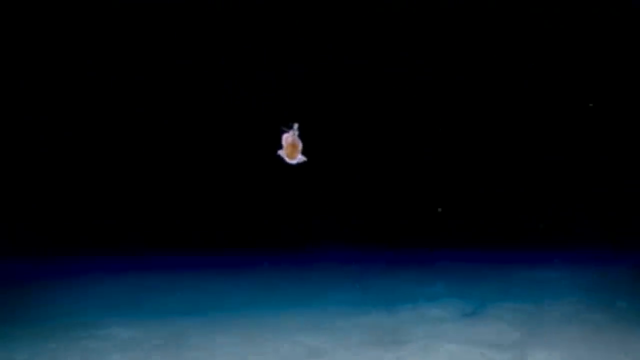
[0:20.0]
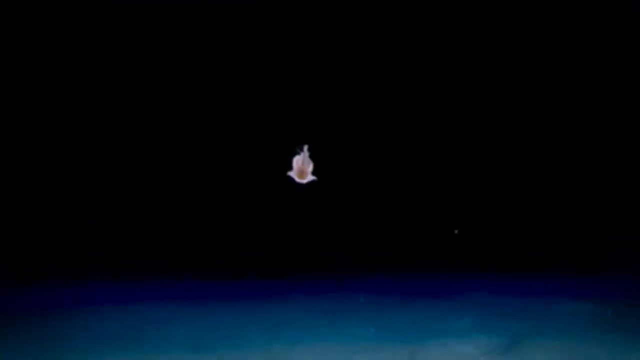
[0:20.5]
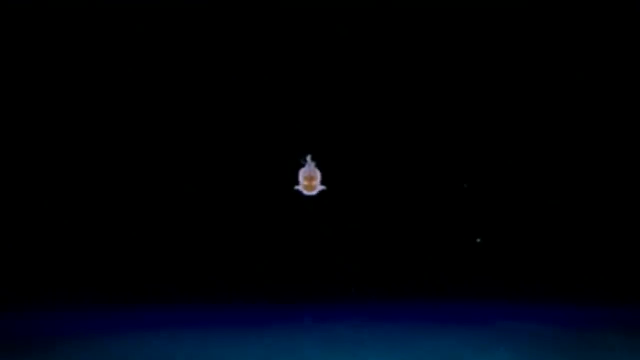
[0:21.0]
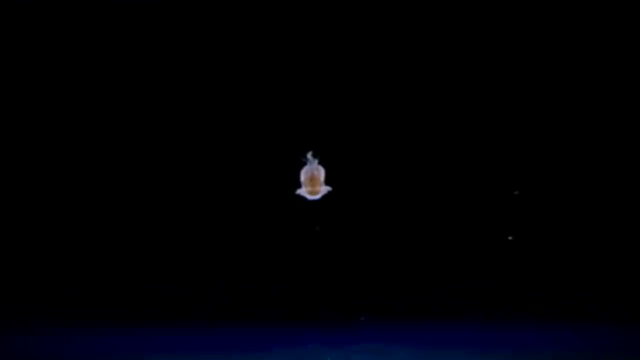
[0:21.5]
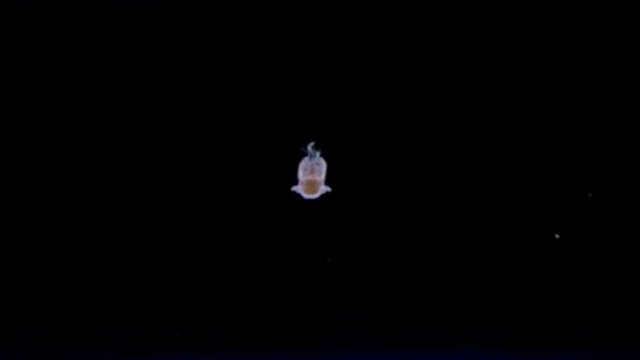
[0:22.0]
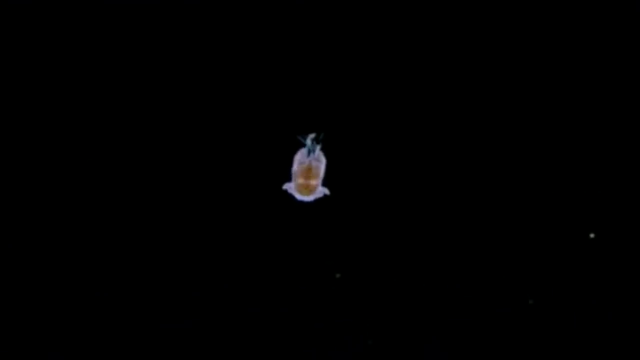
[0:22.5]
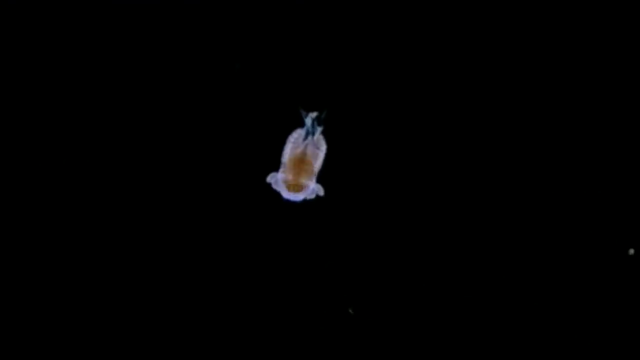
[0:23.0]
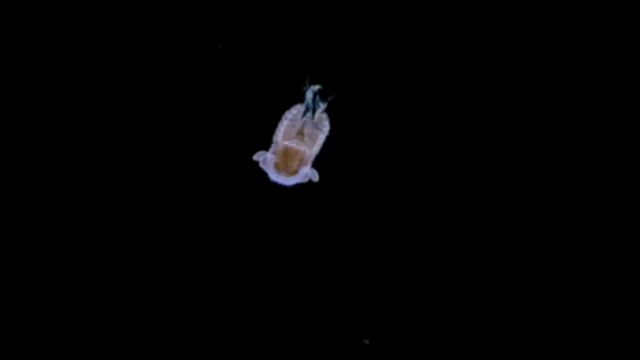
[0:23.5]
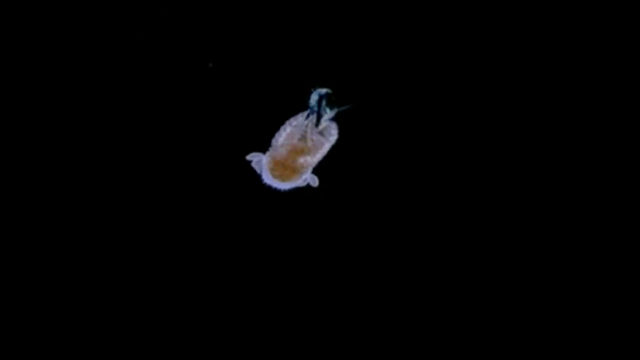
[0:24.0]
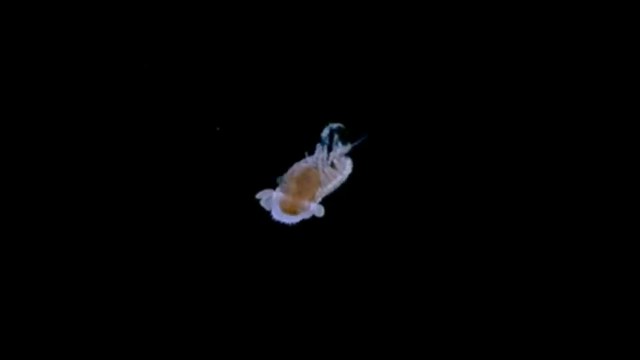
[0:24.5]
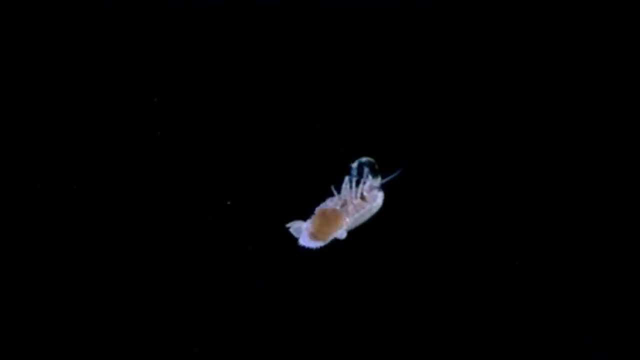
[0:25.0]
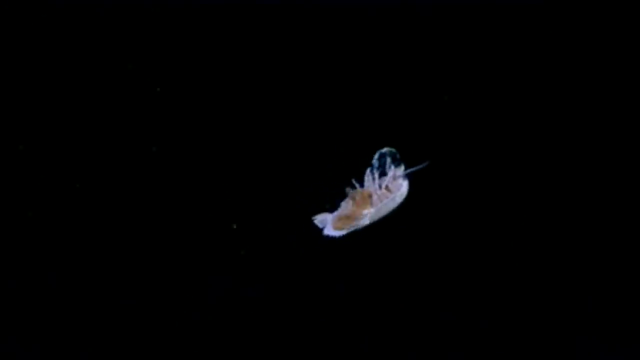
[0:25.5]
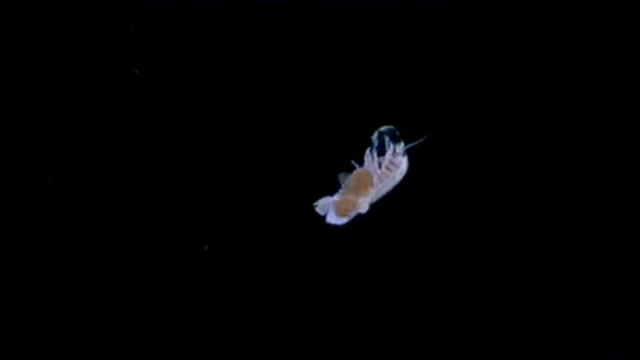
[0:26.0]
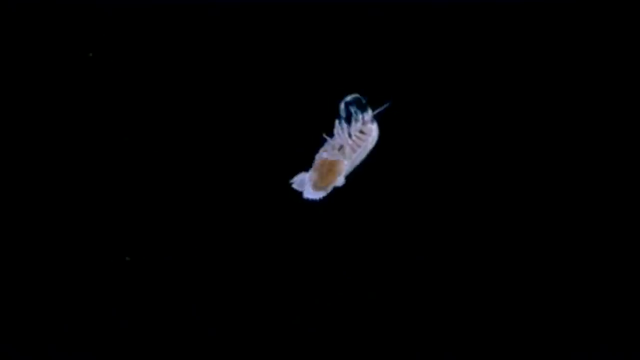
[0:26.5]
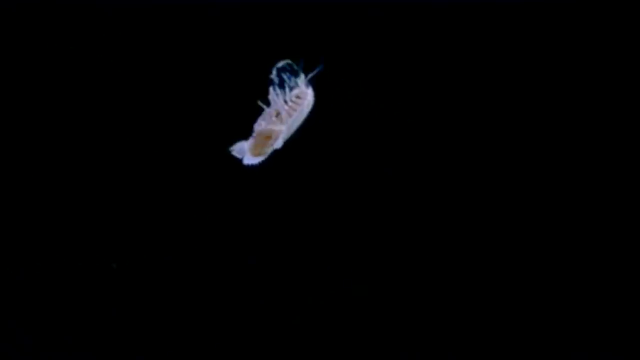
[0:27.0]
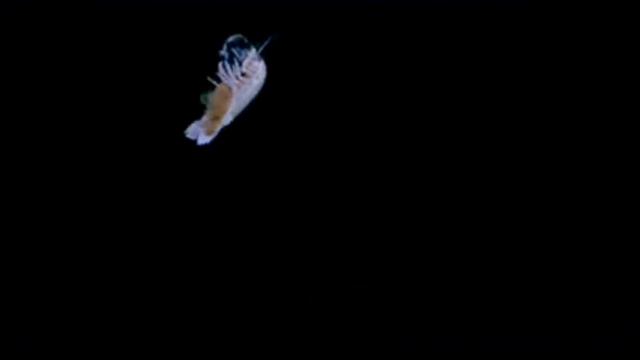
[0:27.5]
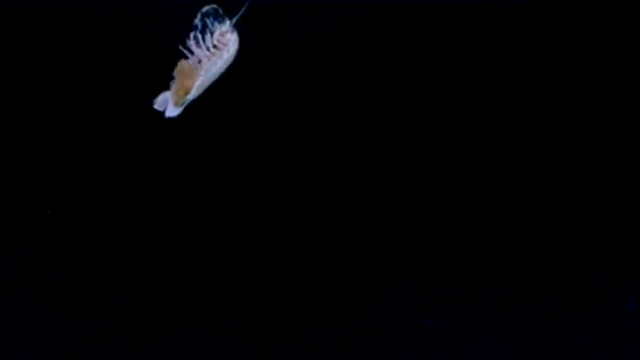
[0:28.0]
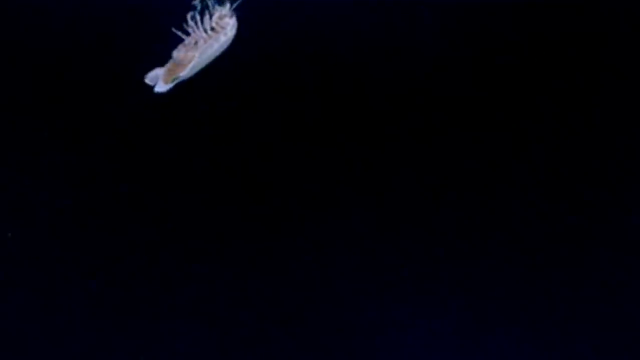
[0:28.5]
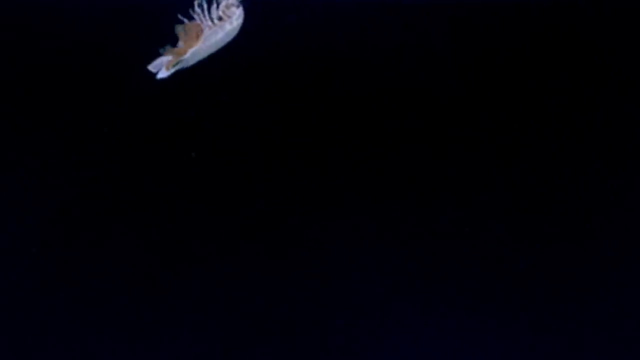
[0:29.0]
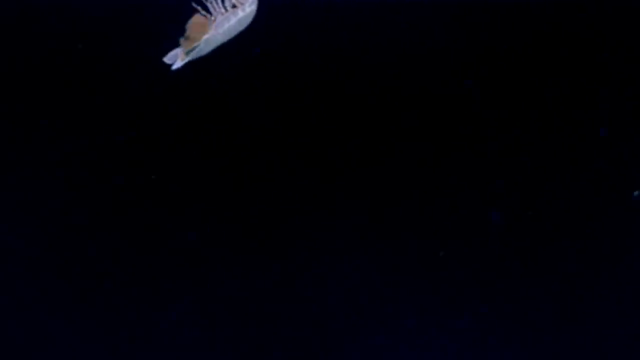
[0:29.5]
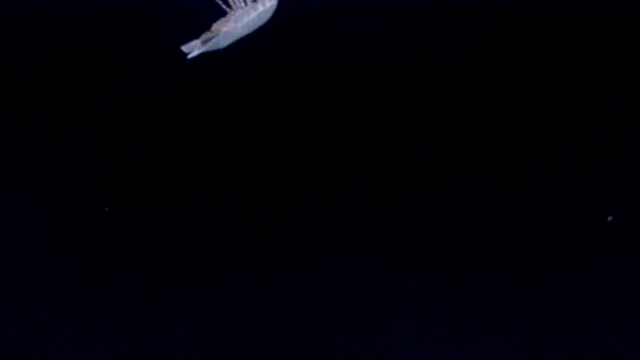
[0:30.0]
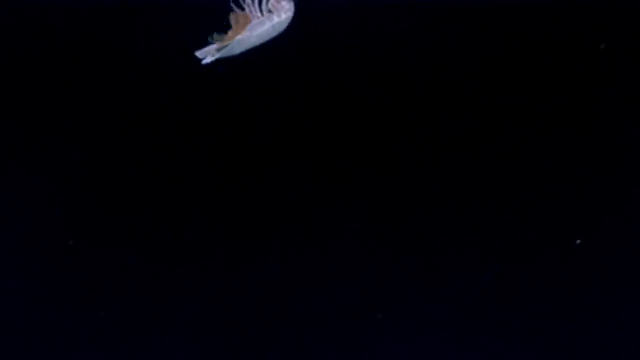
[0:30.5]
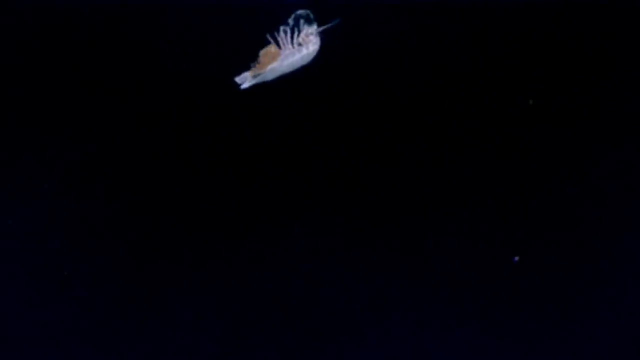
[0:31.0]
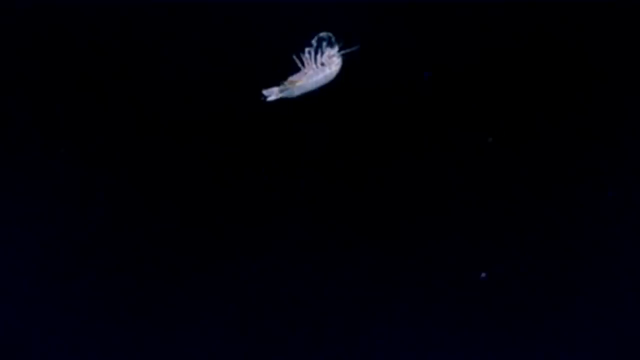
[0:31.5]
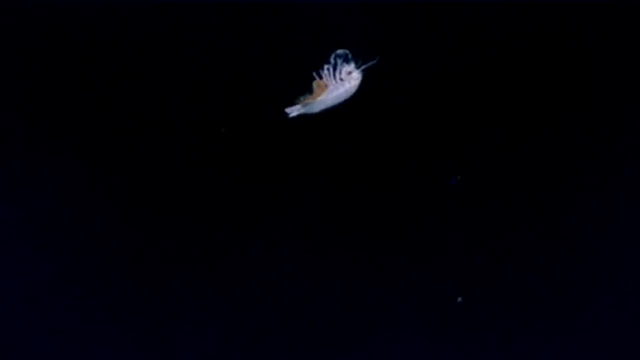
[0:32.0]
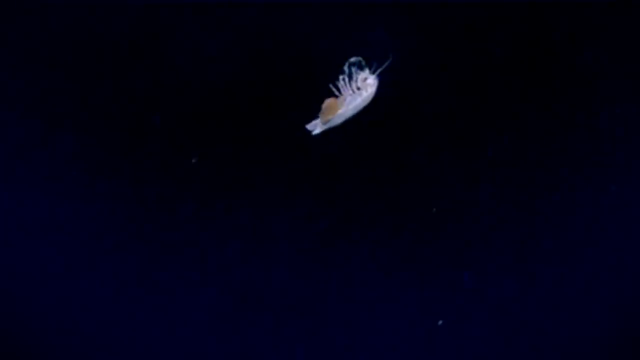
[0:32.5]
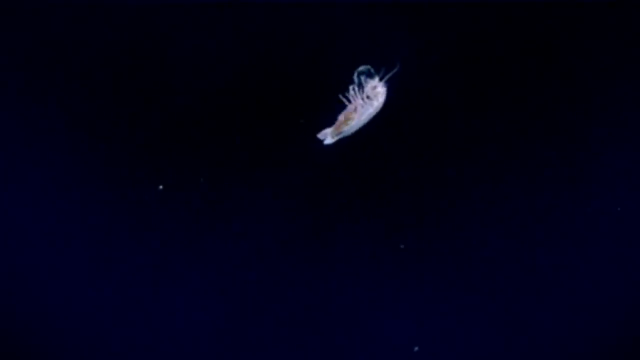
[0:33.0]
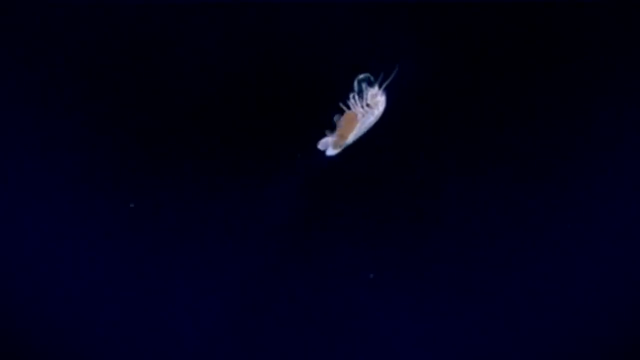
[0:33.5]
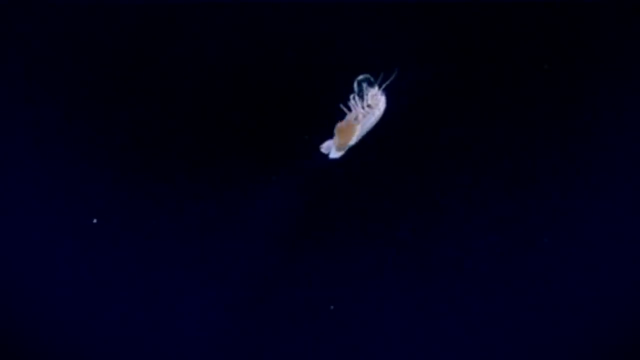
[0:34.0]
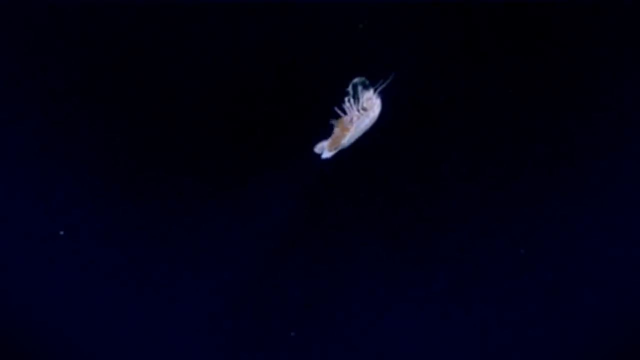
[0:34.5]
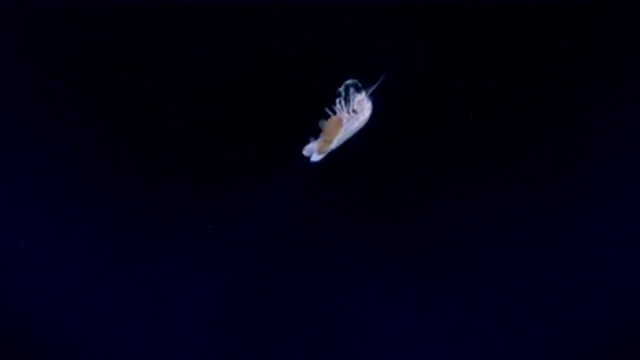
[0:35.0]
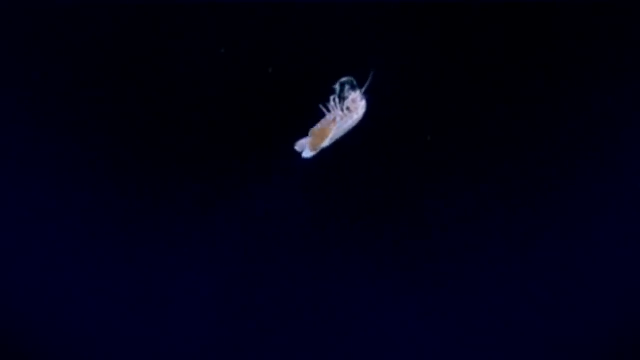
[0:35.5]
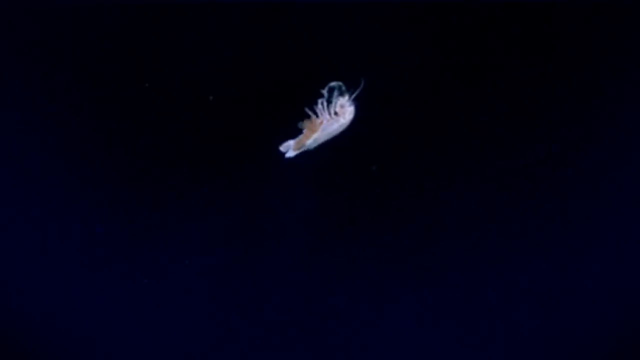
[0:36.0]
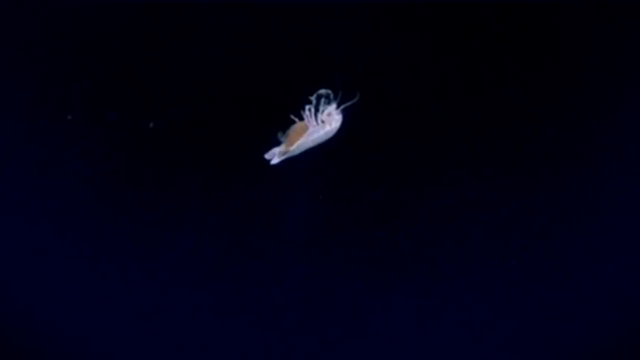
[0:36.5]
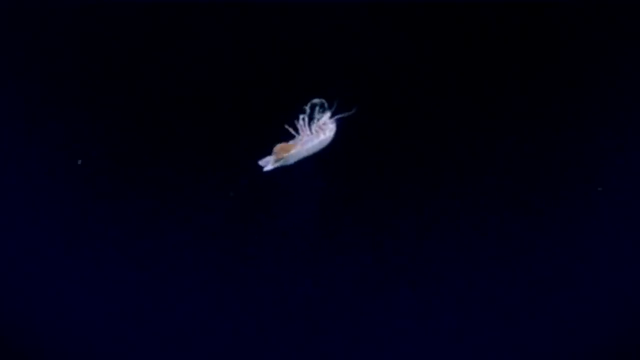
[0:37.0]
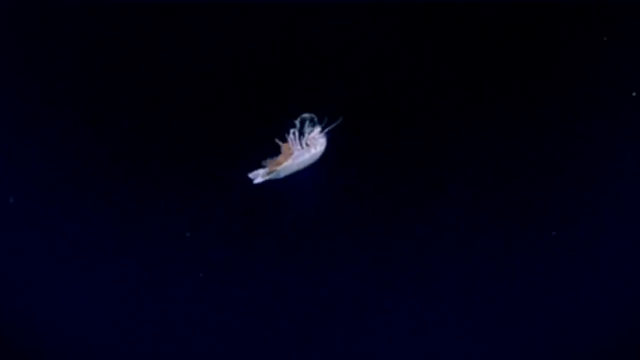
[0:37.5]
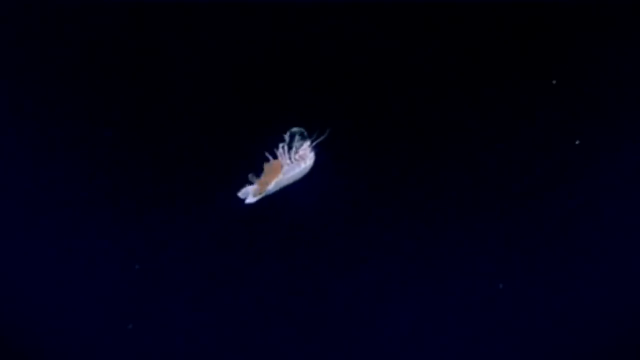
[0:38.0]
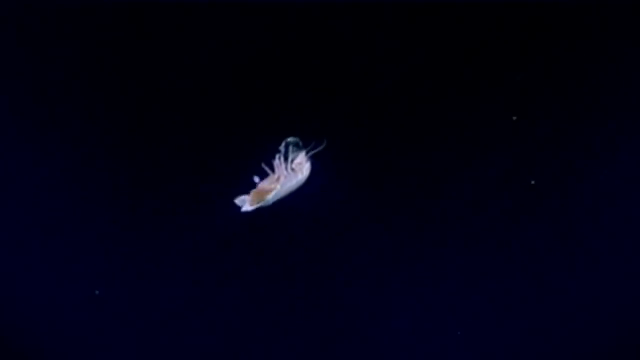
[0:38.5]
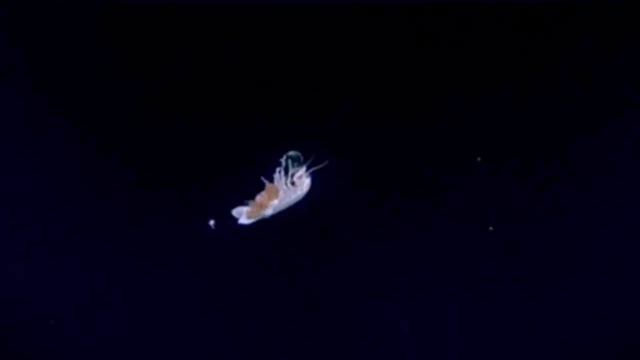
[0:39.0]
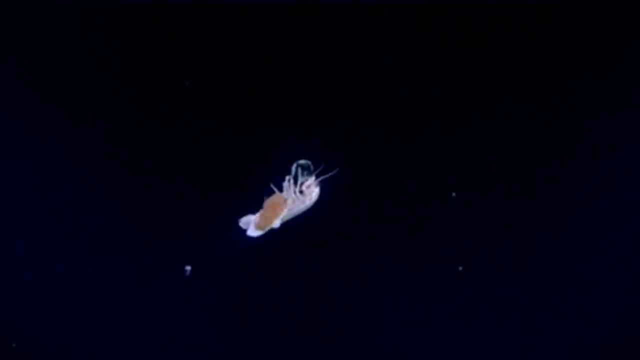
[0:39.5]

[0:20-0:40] The sea creature with the shell on its back propels itself upwards from the sea floor, with an undulating movement at its tail end as it moves along. It has longer claws at the front and two tentacles near the eyes at the head end. A side view shows the length of the legs and the back of the head. Just above the tail on the underside, a series of flaps flutter to move the creature. It is on its back and fans itself along. Flecks of debris or creatures in the seawater are reflected in the camera light. The creature glows from the light of the camera, and its tentacles gently move in the seawater as it moves along. There is something like a bubble or an object that it carries in its front legs, but it cannot be made out.